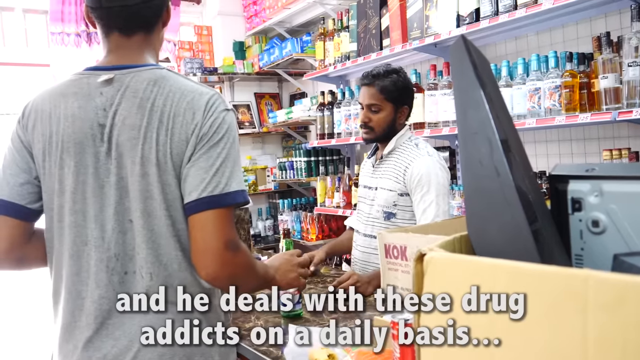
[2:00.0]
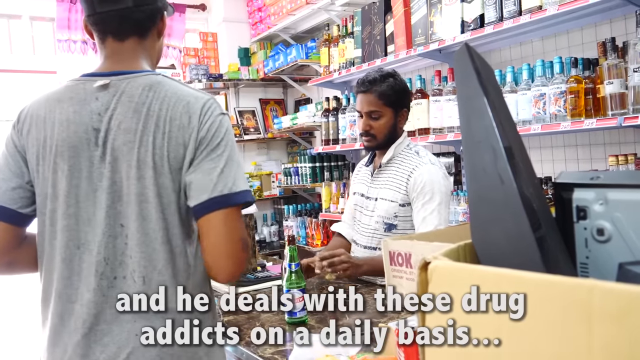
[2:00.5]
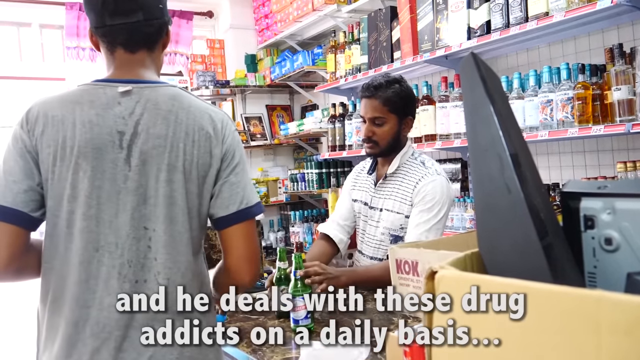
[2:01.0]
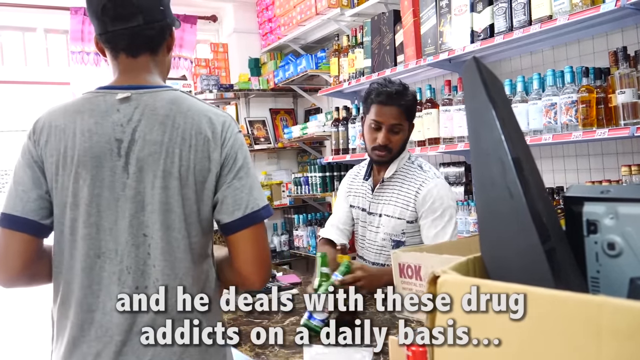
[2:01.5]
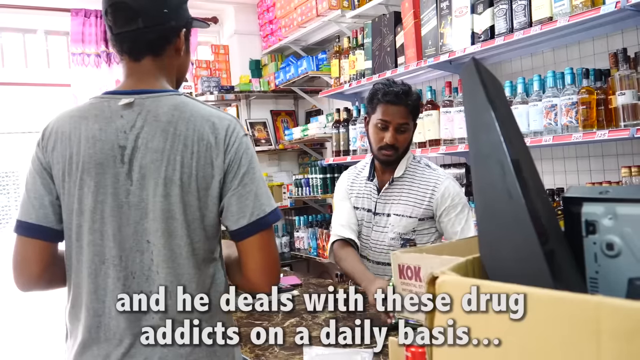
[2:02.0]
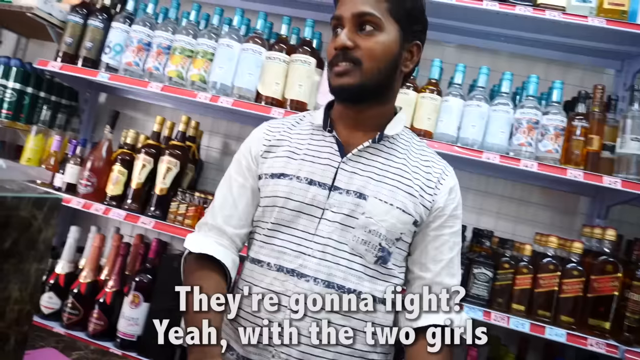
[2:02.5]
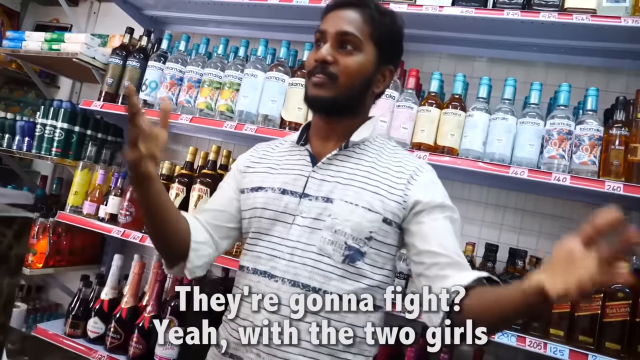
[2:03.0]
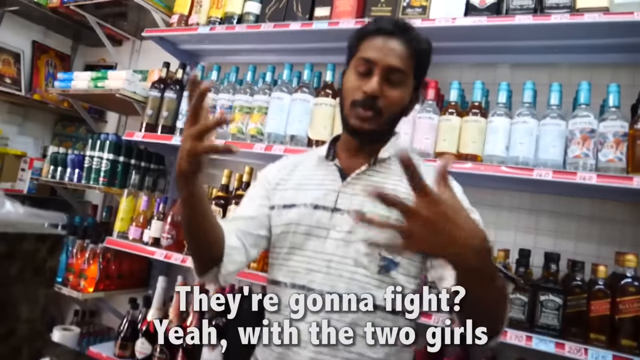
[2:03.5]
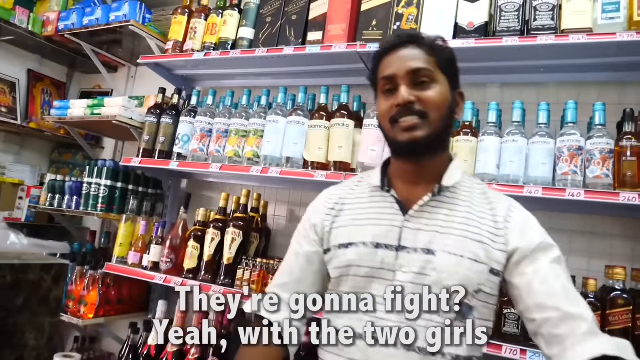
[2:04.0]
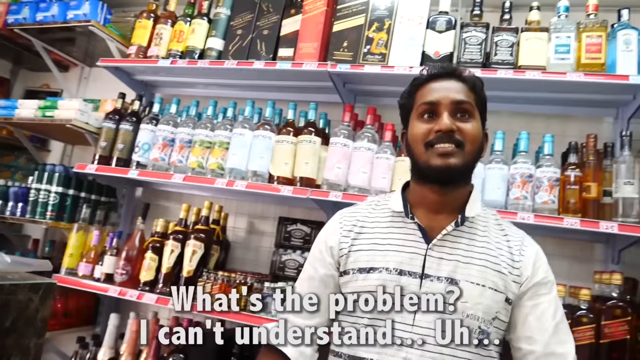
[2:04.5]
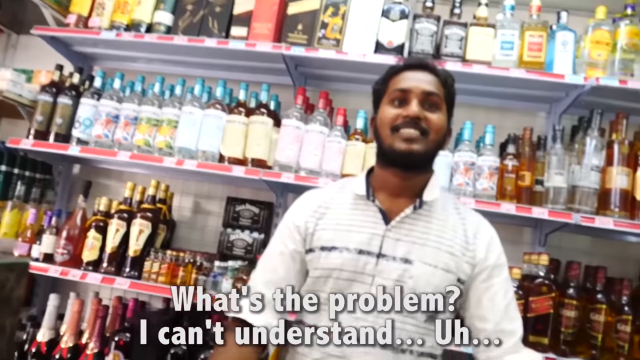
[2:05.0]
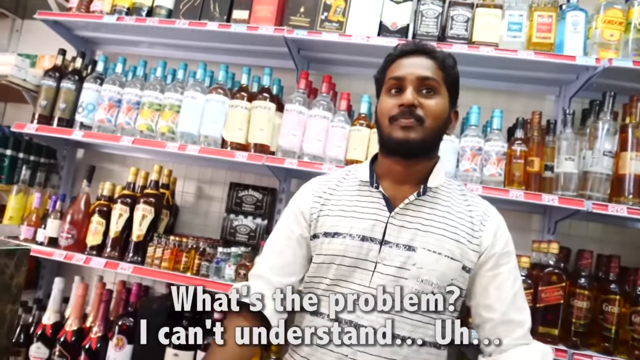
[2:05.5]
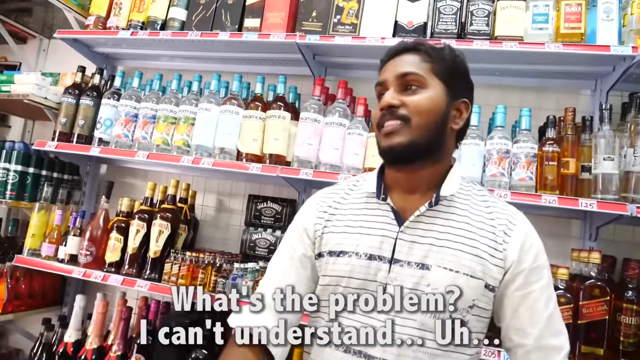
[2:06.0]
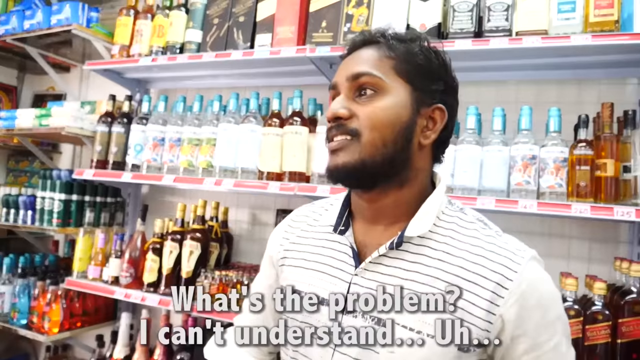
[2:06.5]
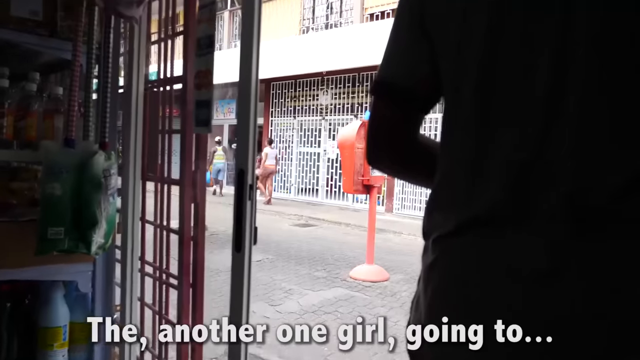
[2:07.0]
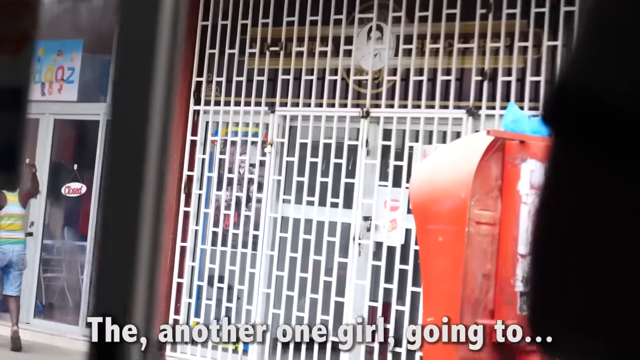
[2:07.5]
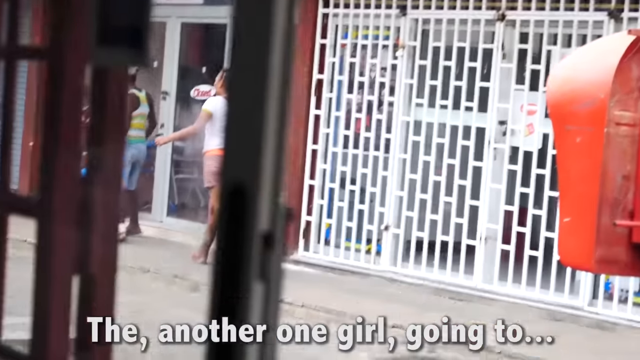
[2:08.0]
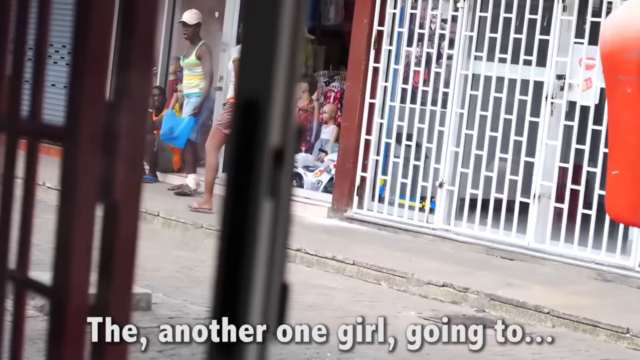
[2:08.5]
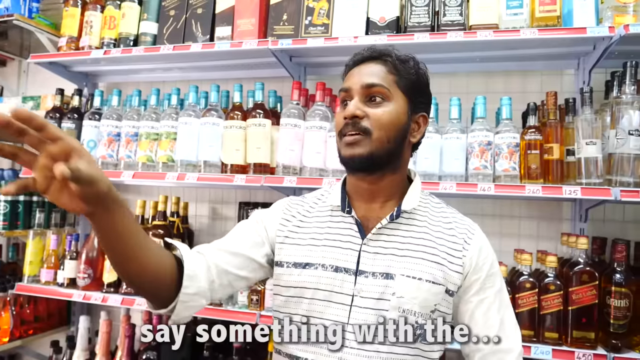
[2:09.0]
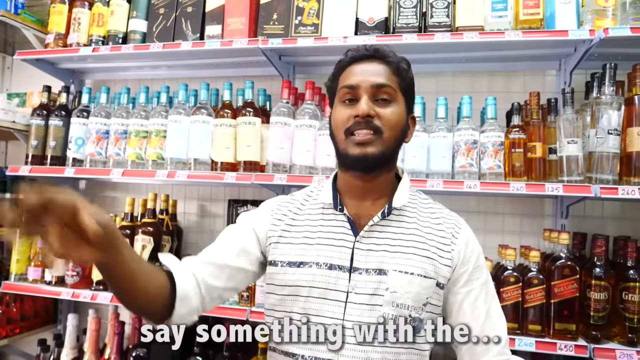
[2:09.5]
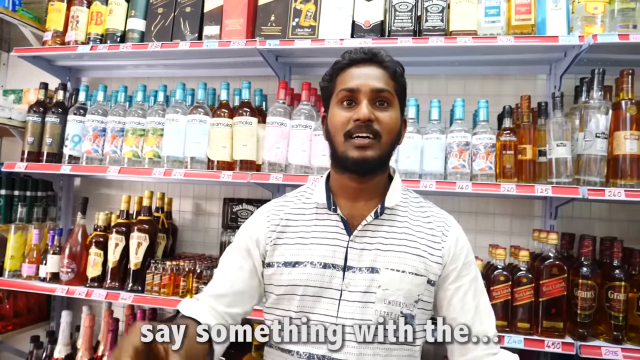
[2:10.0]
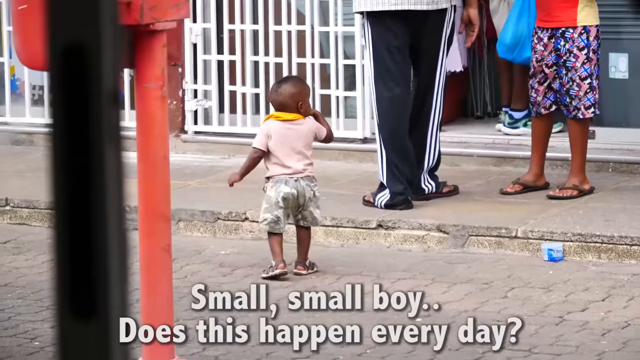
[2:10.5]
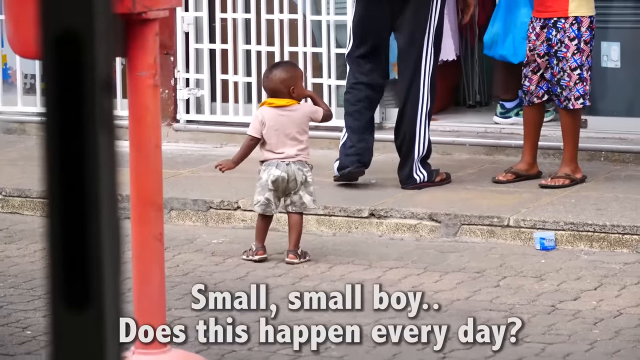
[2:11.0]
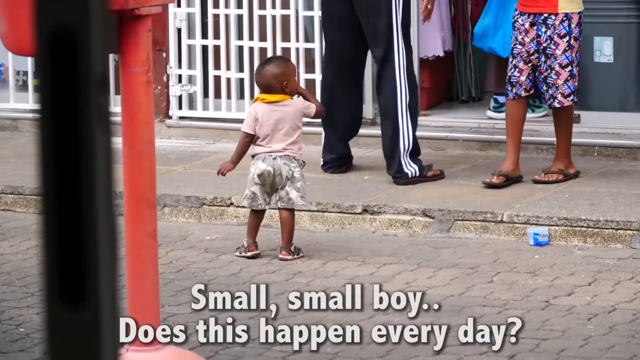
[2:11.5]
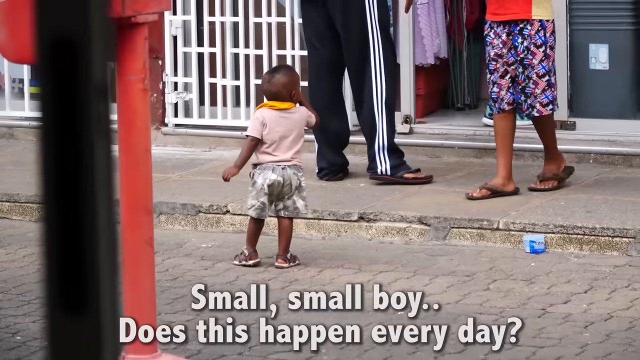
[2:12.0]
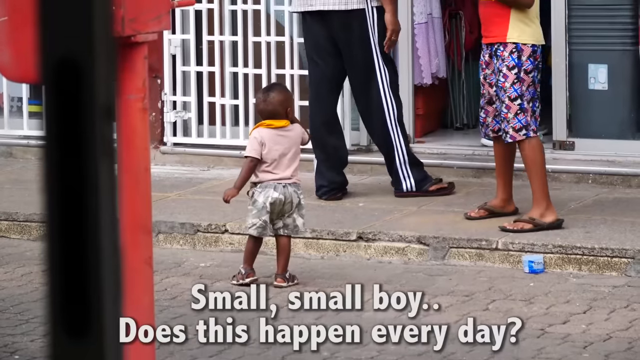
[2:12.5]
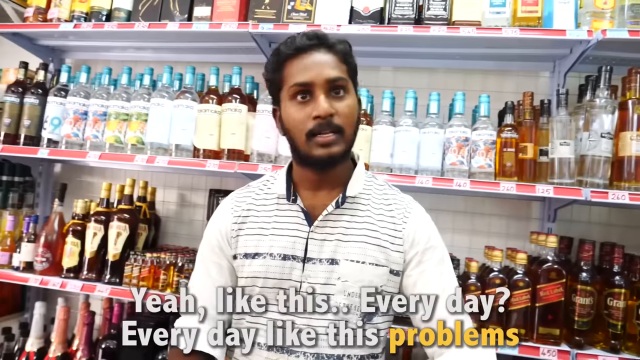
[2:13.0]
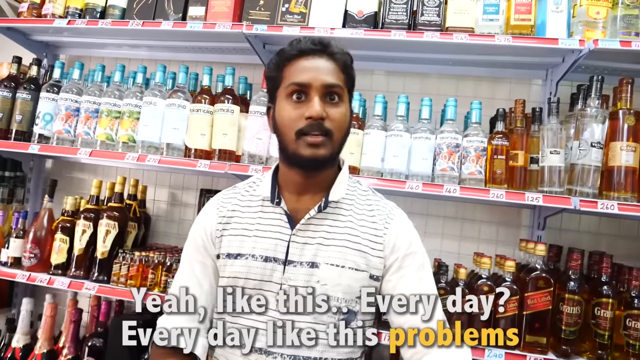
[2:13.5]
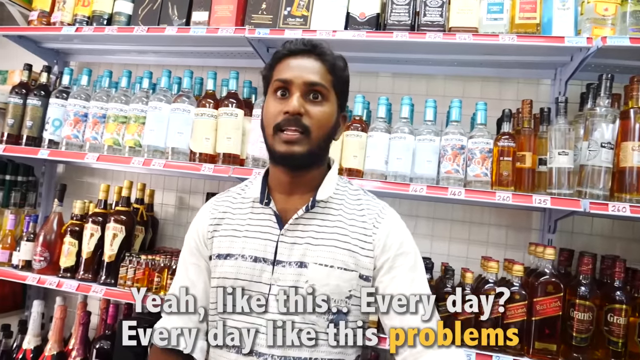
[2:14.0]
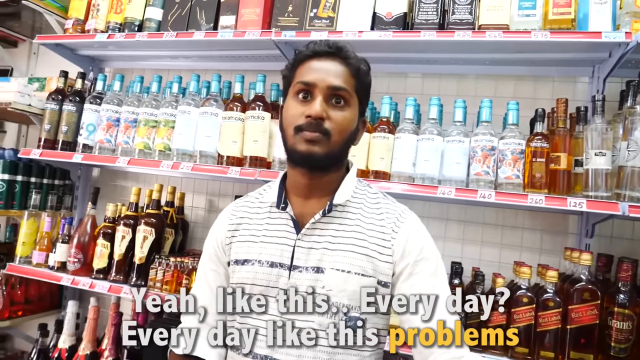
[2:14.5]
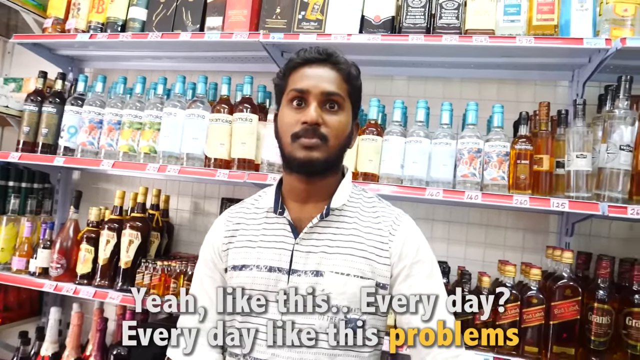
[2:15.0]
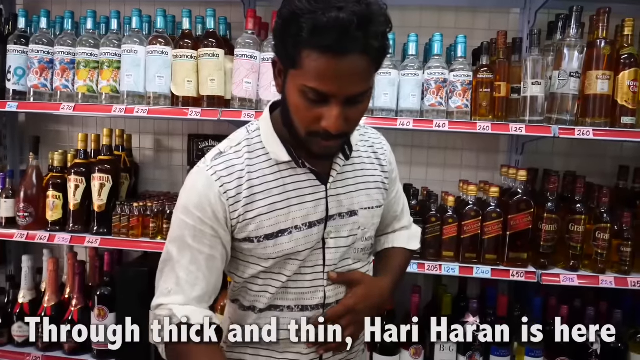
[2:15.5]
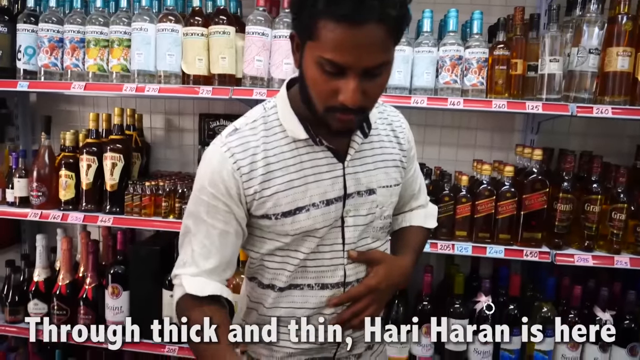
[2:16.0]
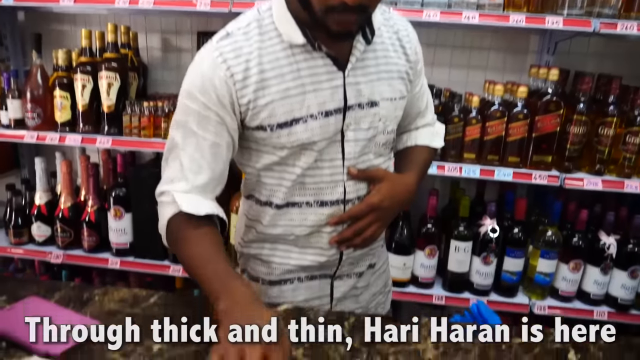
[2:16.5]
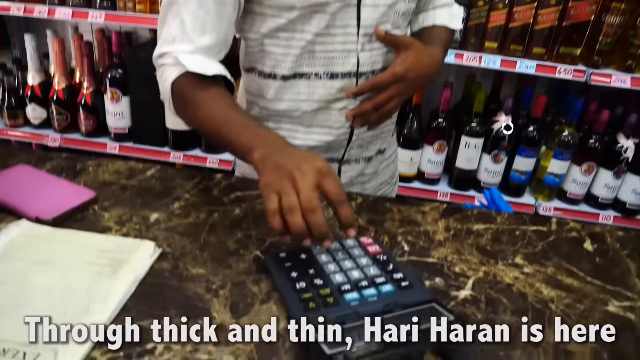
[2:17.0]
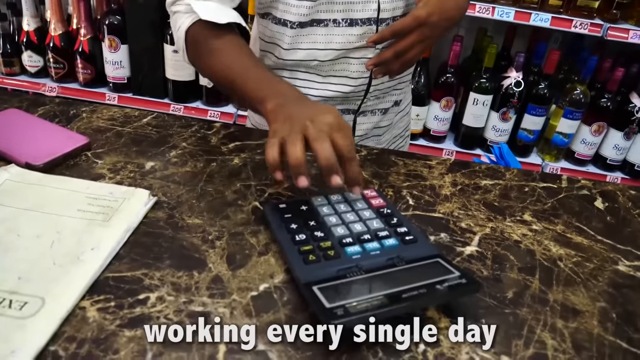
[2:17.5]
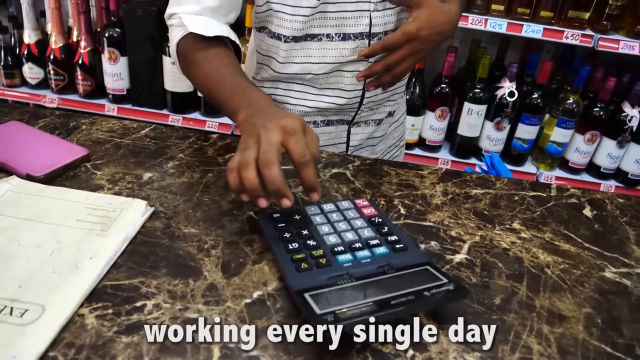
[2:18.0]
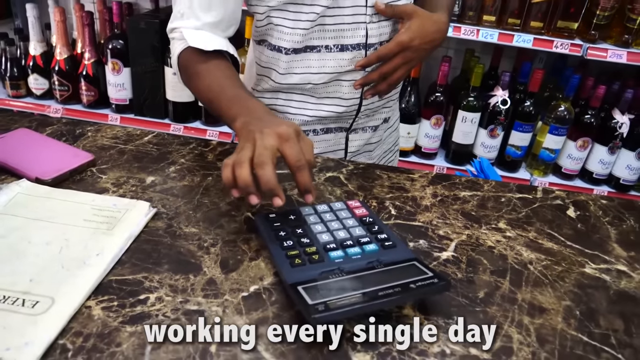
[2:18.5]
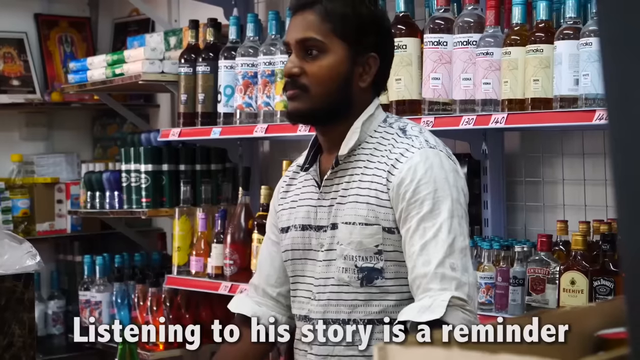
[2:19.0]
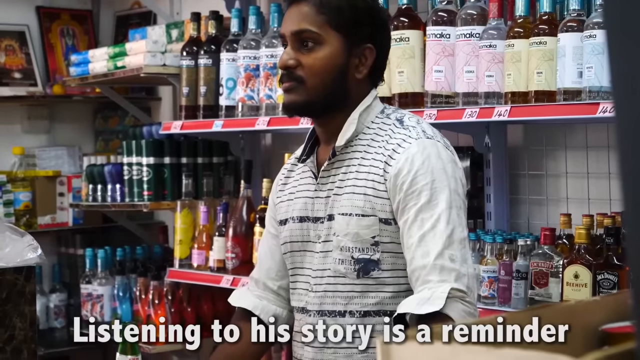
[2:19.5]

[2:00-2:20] While the two men talk, a customer comes to the counter and pays. The shop seems to be on a busy road where many people pass outside, in what seems to be a developed town or area. Serving the customer, the owner uses a big calculator to check how much the product costs. The customer wears a light grey t-shirt with a dash of blue on the collar and sleeves, and he has brought empty beer bottles, apparently returning them in order to buy beer.